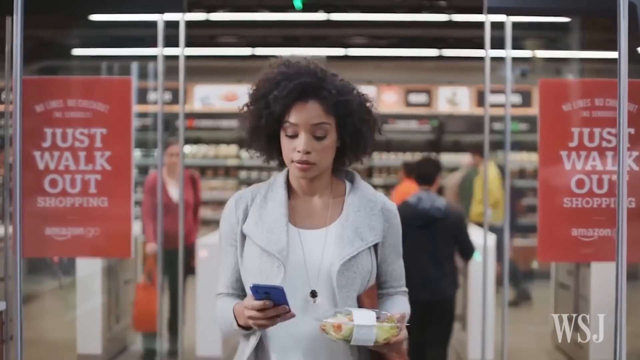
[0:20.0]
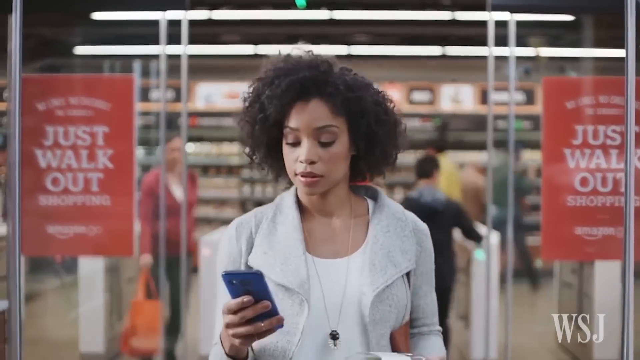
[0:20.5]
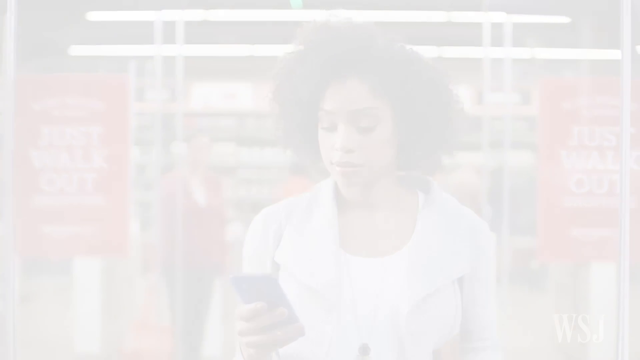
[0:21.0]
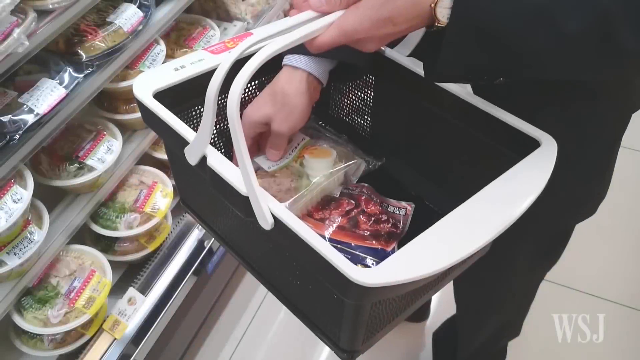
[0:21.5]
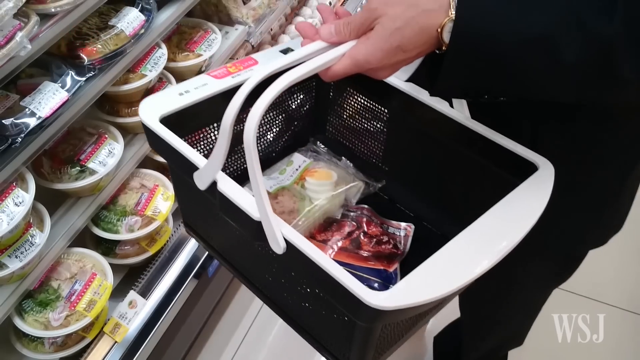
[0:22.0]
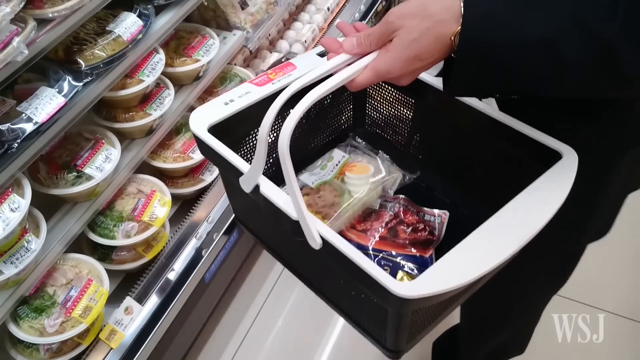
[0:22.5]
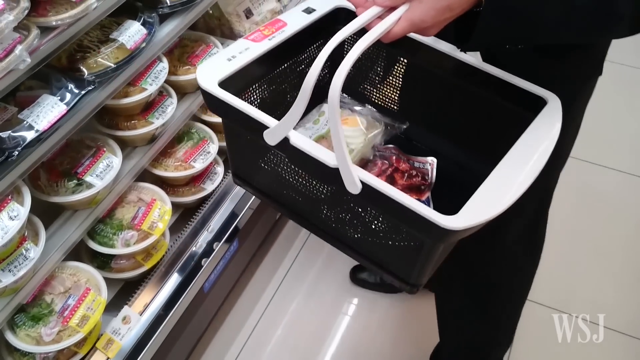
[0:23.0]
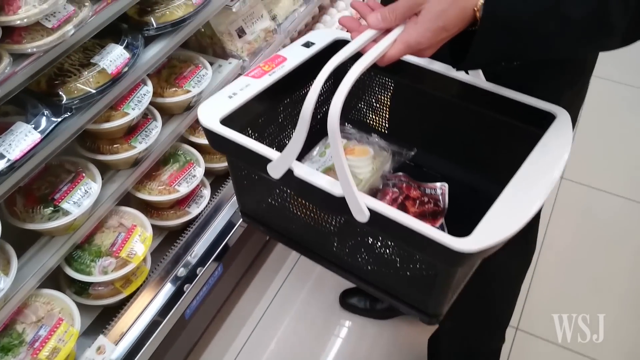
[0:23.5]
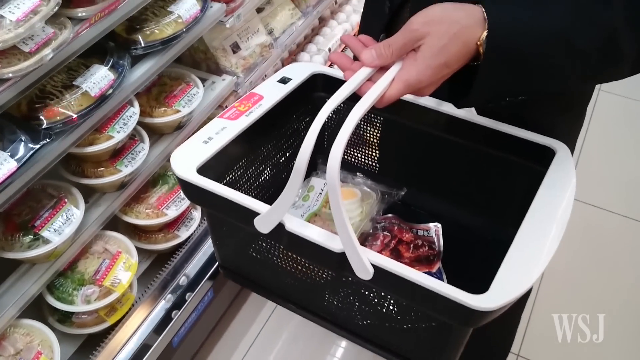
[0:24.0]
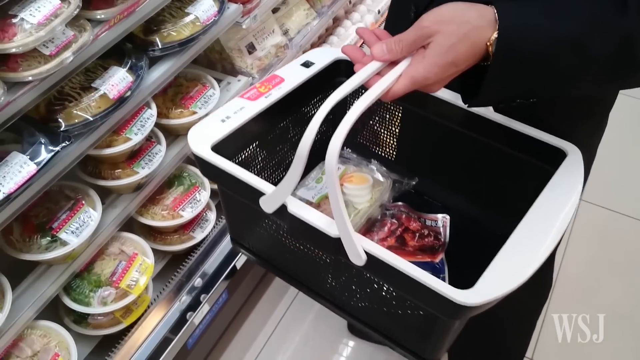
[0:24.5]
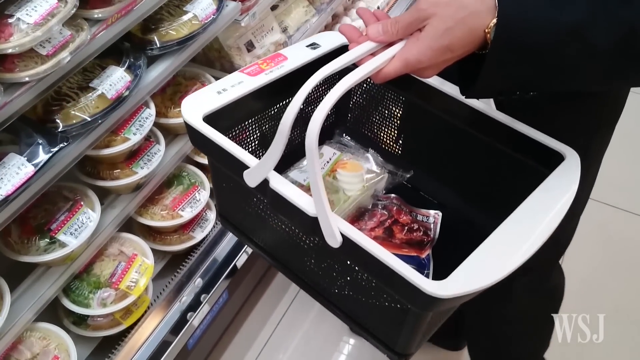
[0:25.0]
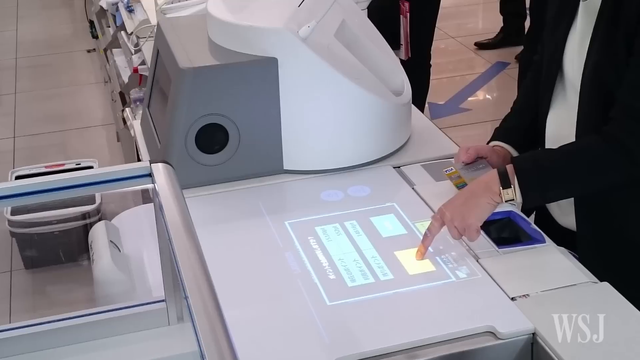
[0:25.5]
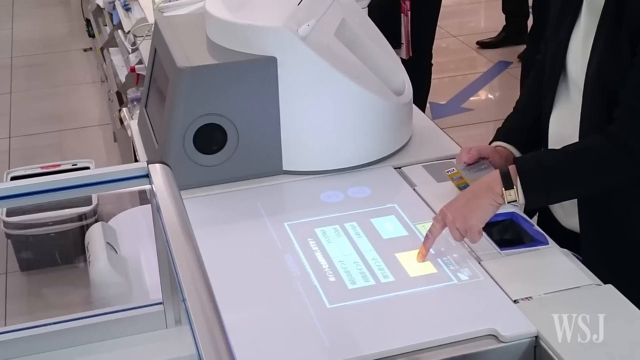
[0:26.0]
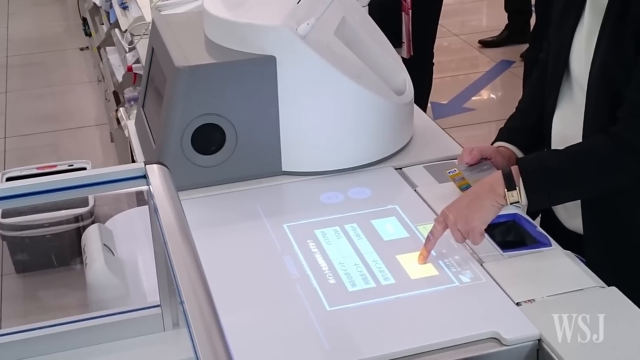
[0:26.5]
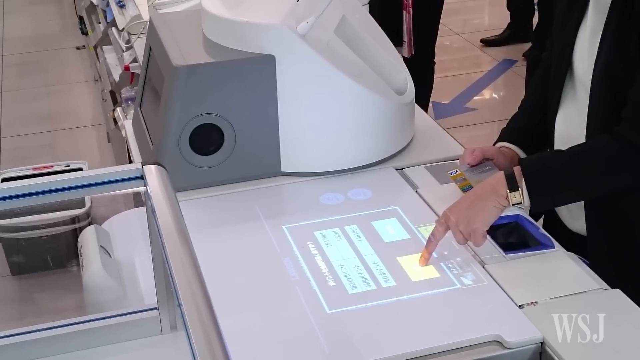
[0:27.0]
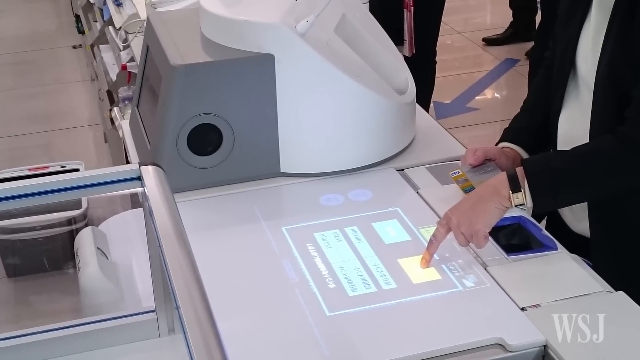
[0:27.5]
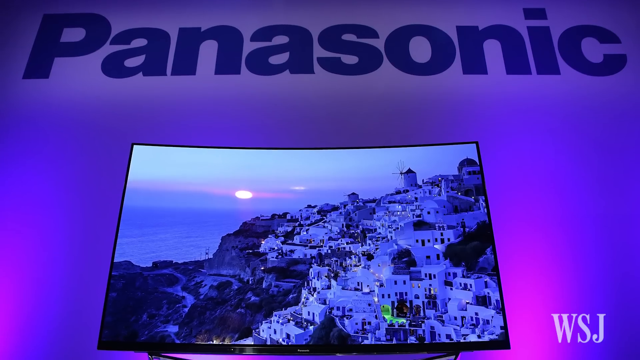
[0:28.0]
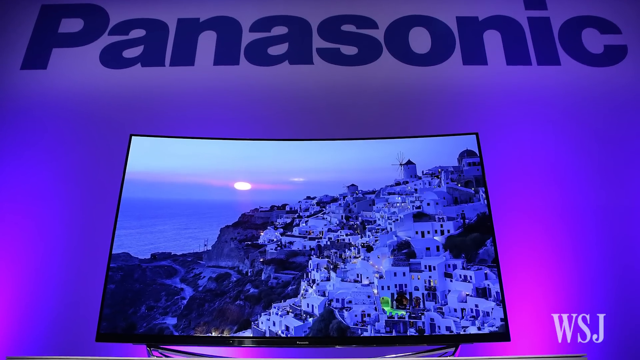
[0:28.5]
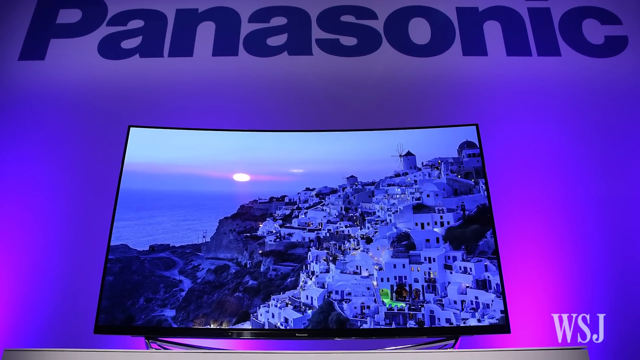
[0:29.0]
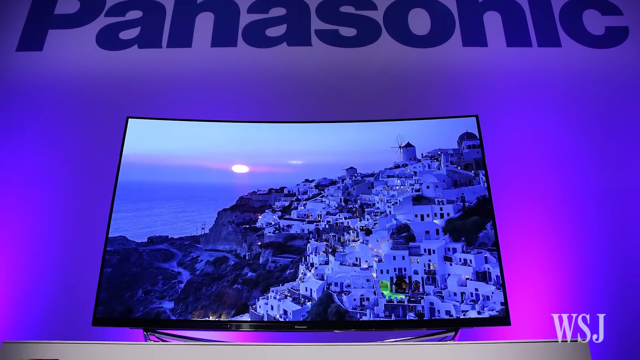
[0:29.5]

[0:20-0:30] A woman exits a store through opening glass doors, looking down at a blue phone held in her left hand as she walks, while her right hand holds a plastic container with a sandwich in it. The scene changes to a person's hands holding a black basket with white handles and putting food into it; different foods are on the shelf and the person looks at them. Next, people set items down on a white computer screen, and a person points to an illuminated yellow button on top of it. A backdrop reading "Panasonic" appears, along with a big screen showing a mountainous hillside and an oceanside hillside of homes, apparently in Greece.